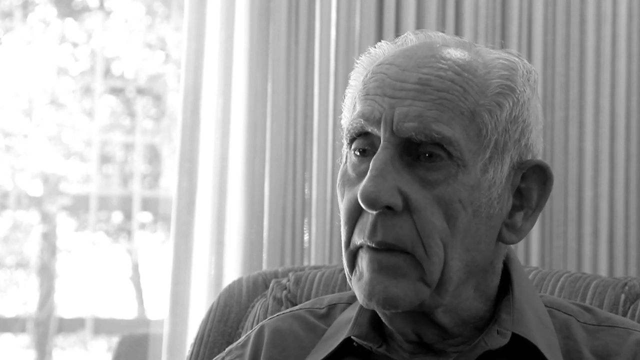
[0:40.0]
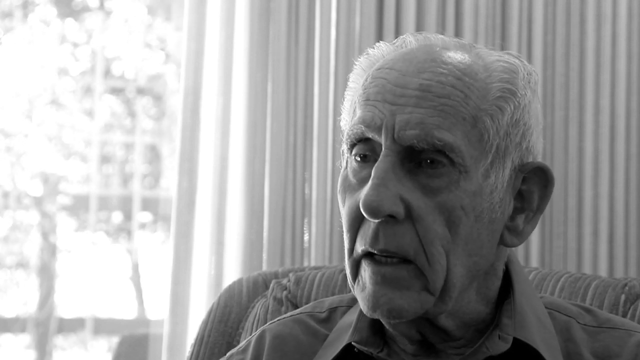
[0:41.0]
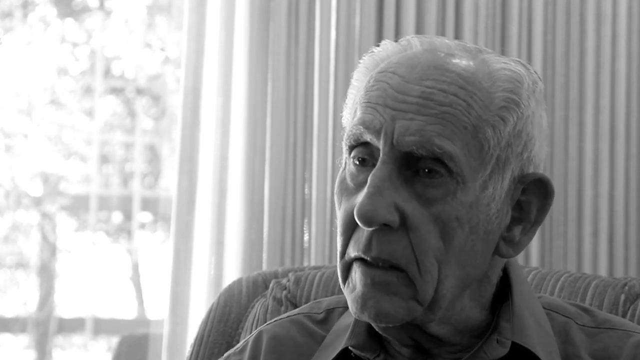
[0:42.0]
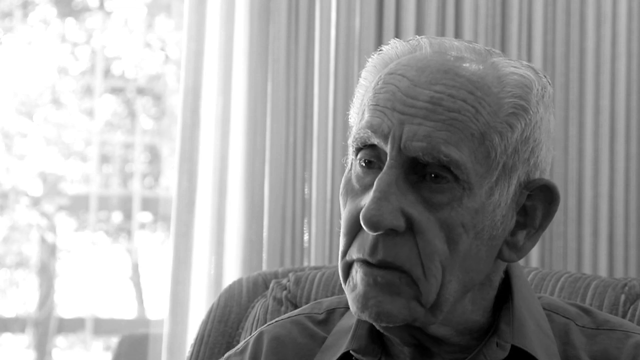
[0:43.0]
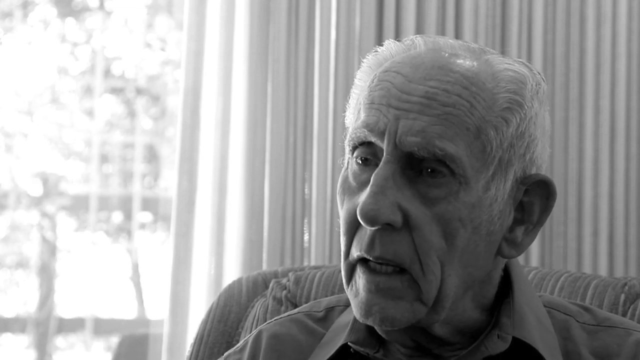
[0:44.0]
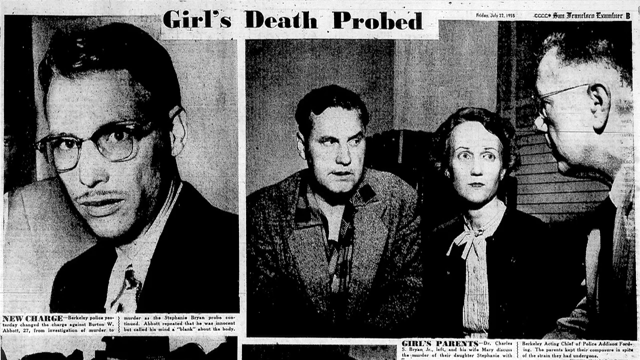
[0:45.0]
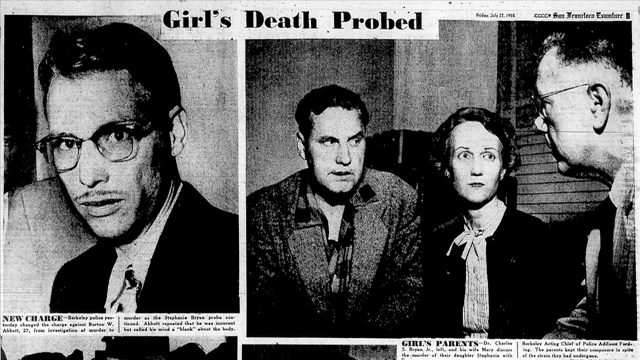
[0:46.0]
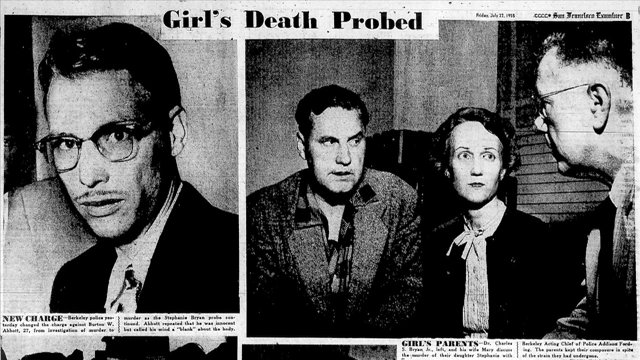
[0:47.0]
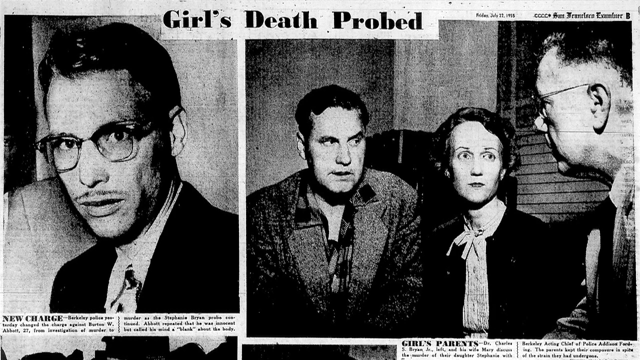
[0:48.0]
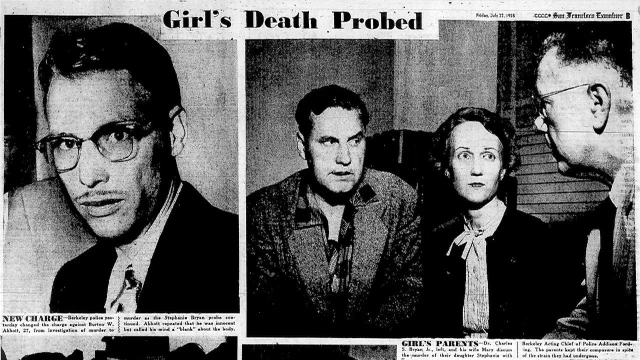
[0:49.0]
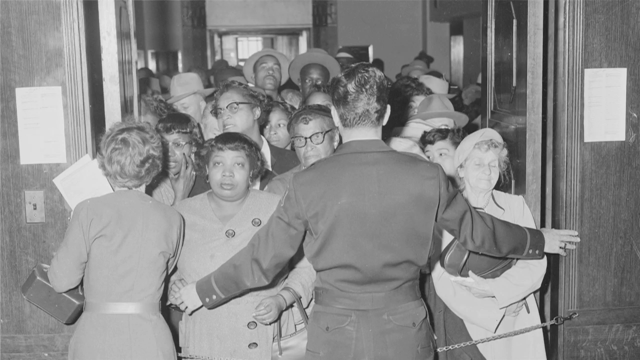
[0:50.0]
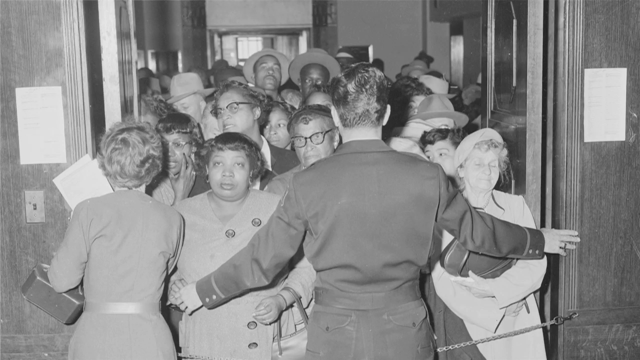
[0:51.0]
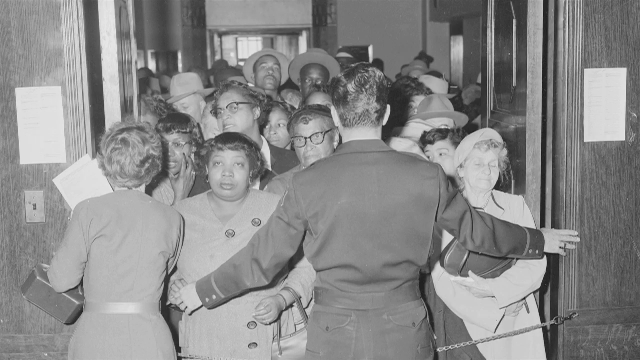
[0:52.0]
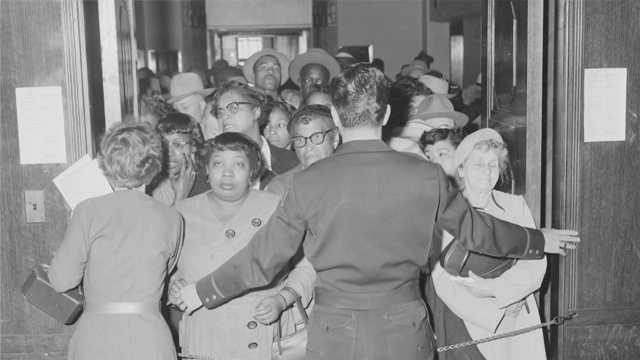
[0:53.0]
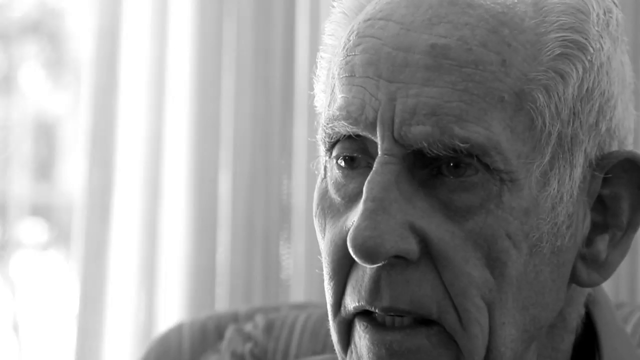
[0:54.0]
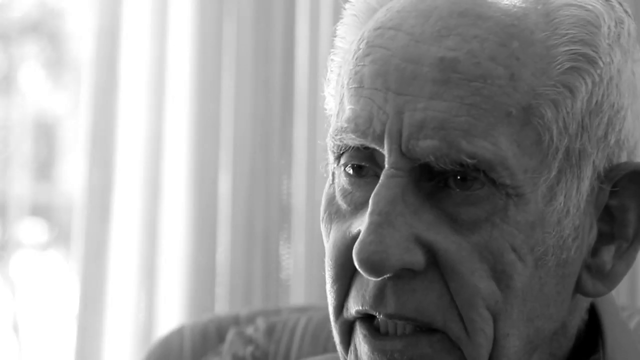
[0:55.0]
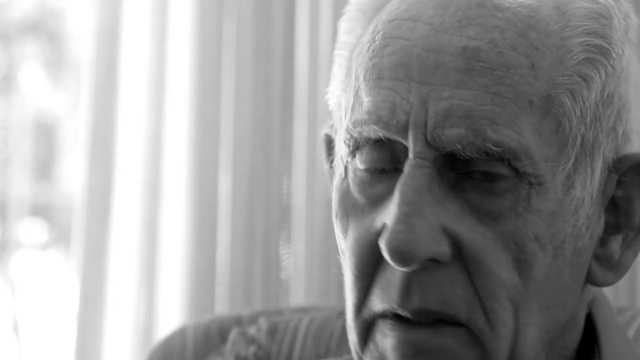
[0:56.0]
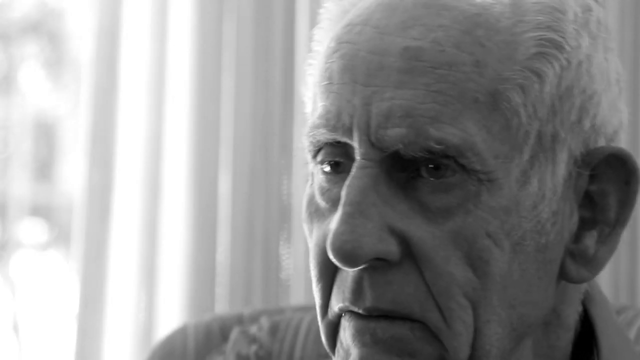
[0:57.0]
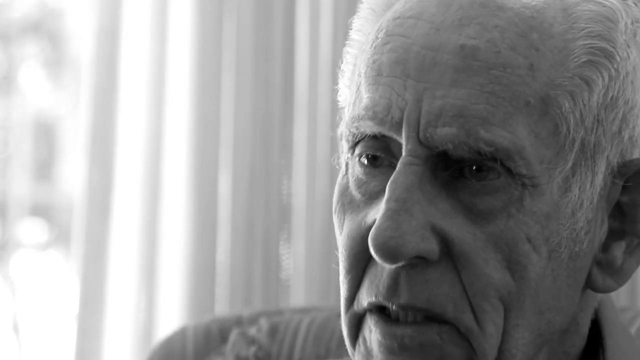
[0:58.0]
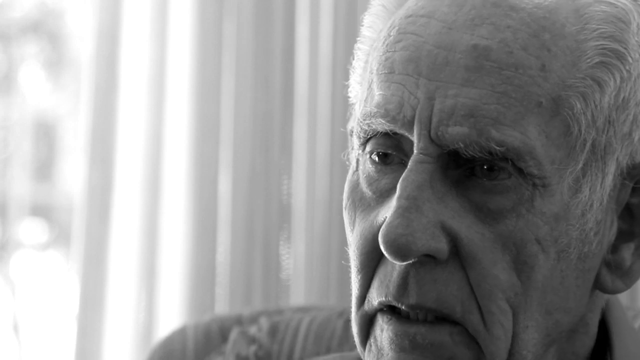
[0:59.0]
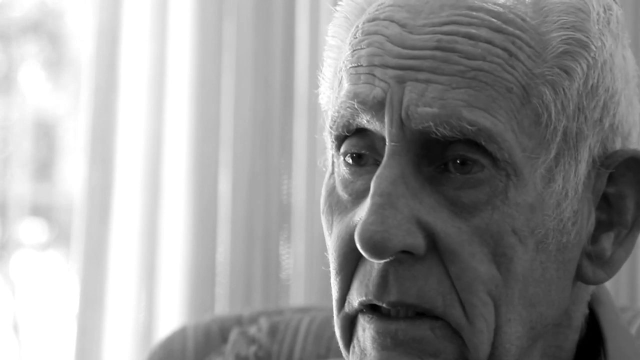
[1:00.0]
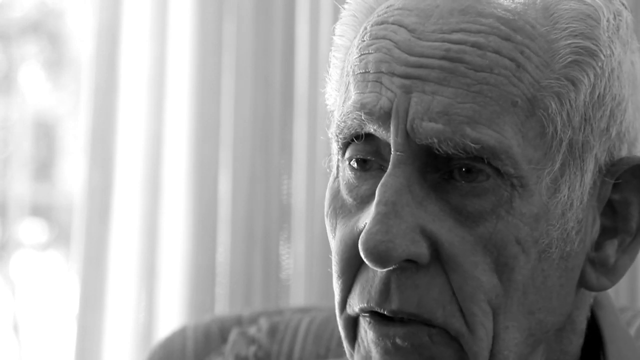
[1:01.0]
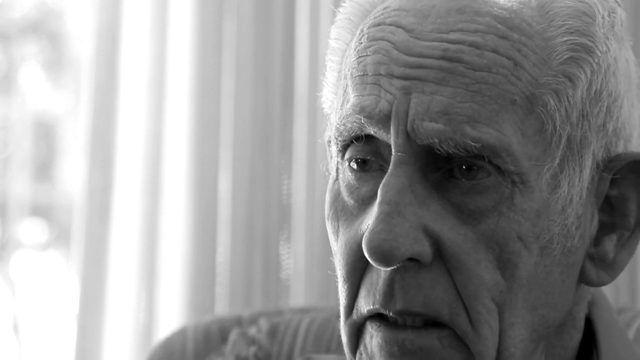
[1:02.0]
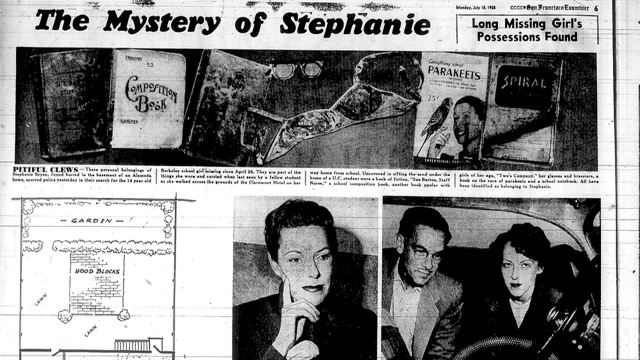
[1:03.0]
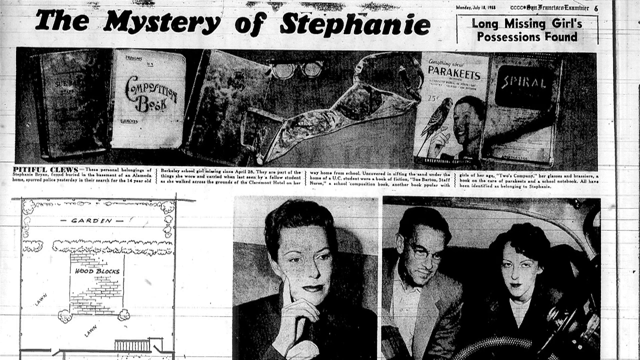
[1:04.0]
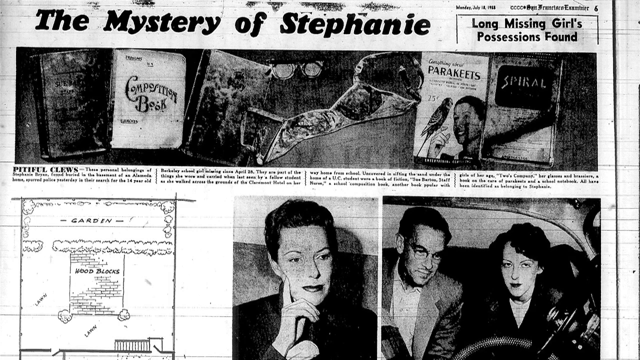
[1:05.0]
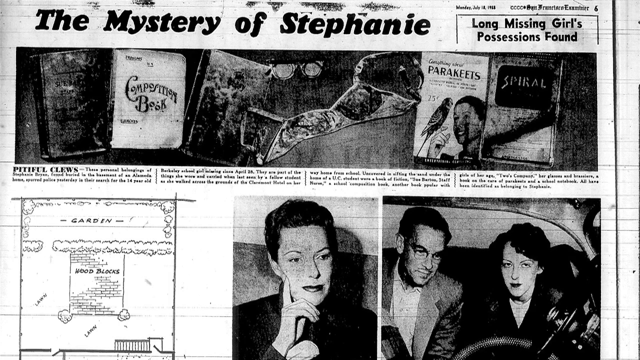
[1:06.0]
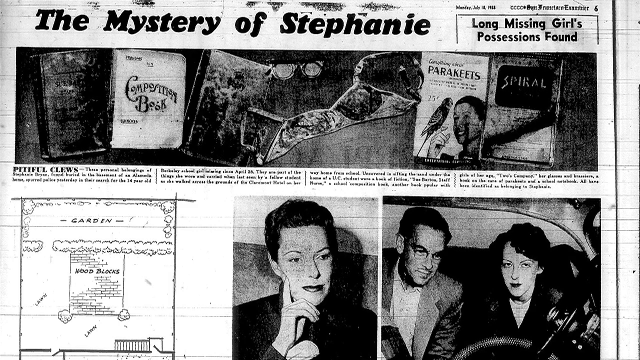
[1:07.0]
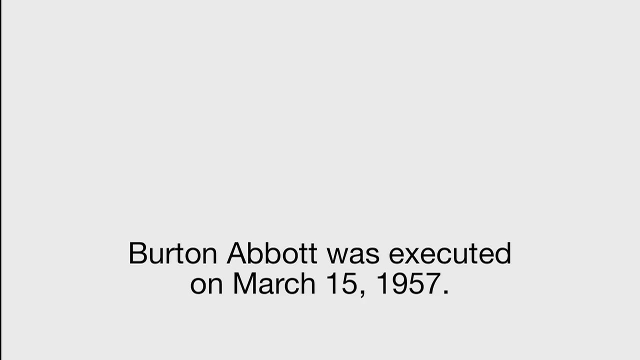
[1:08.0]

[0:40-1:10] The old man continues to talk. Another series of photos from the San Francisco Examiner of the time follows. One shows Burton W Abbott, 27, being interrogated under suspicion of murdering Stephanie. Another shows Stephanie's concerned parents, Dr. Charles Bryan and his wife Mary, discussing their daughter's case with the acting chief of police in Berkeley. Then a crowd in an office building is being held back by security staff; they are dressed in 1950s fashion and are a mixture of black and white people. The old man is seen again talking. Another San Francisco Examiner headline concerns the mystery of Stephanie, with "Pitiful clues": some of her personal belongings have been found, apparently her school books, and part of her bra. Various concerned-looking people are in the photo. The video then states that Burton Abbott was convicted and executed for Stephanie's murder on March 15th 1957.